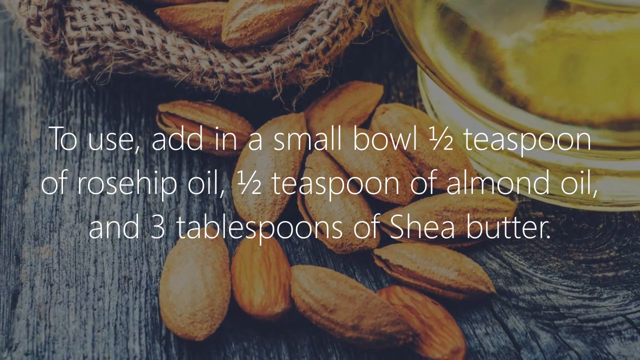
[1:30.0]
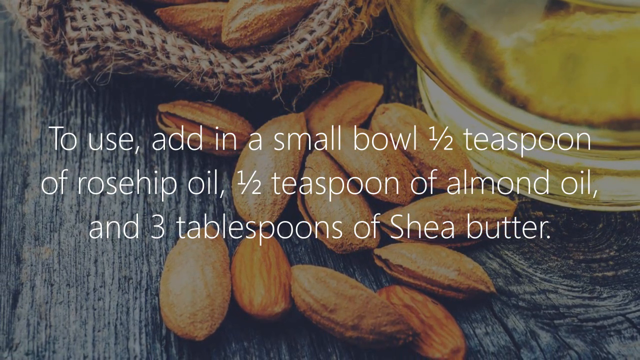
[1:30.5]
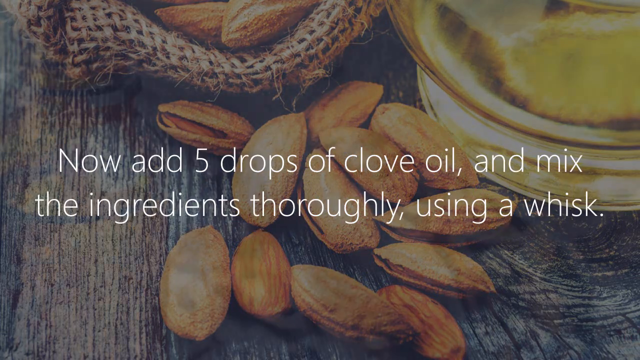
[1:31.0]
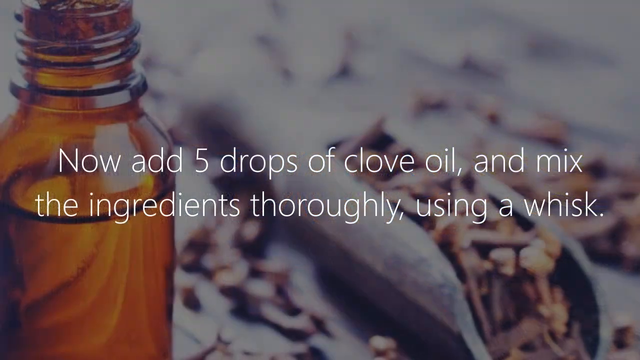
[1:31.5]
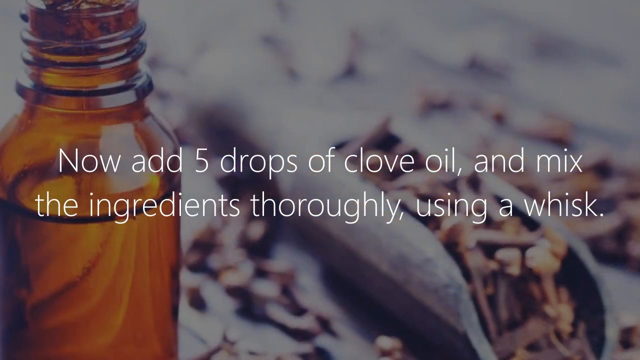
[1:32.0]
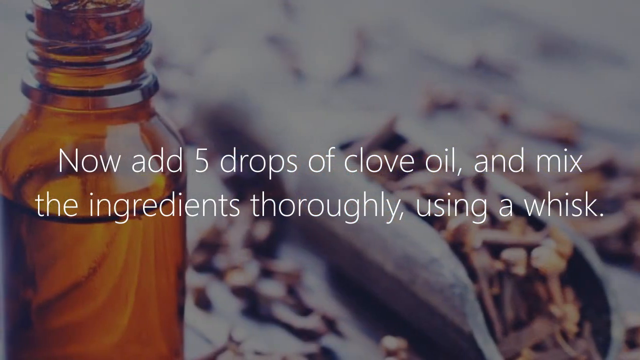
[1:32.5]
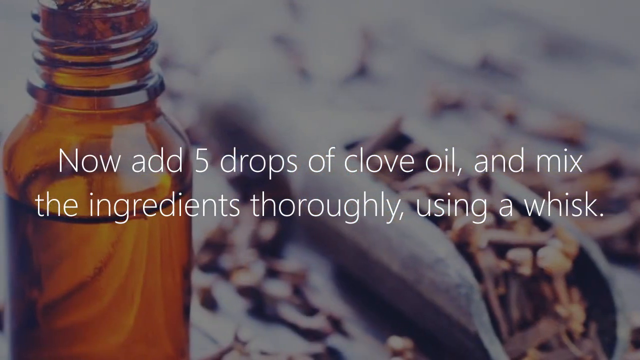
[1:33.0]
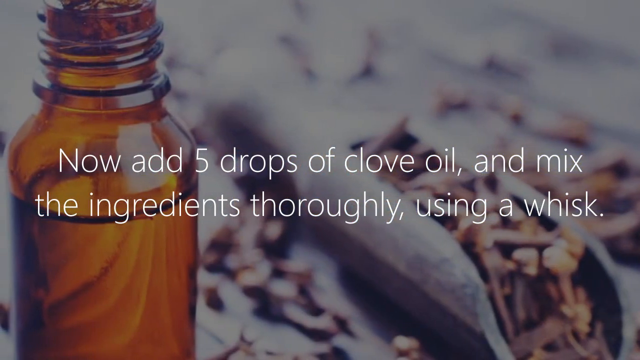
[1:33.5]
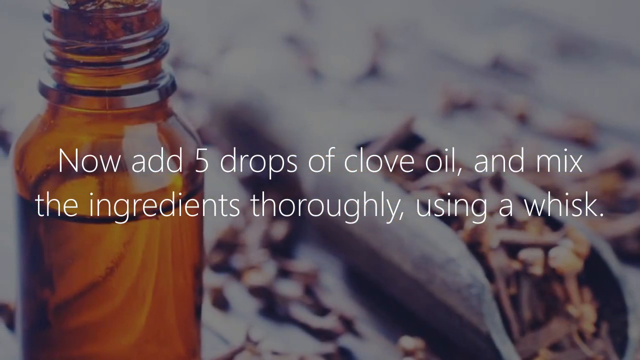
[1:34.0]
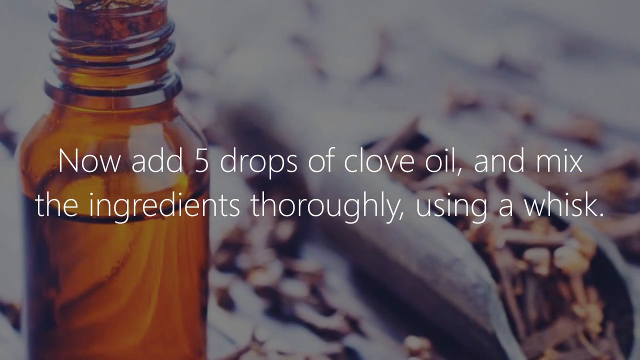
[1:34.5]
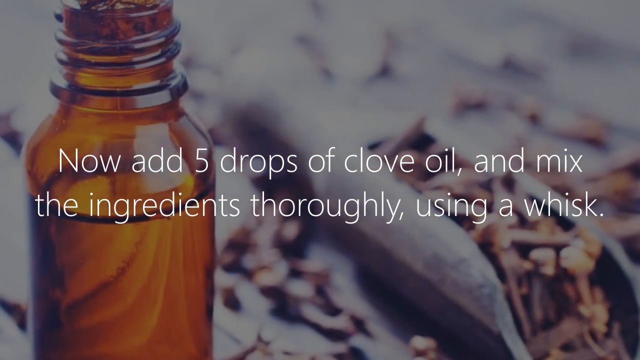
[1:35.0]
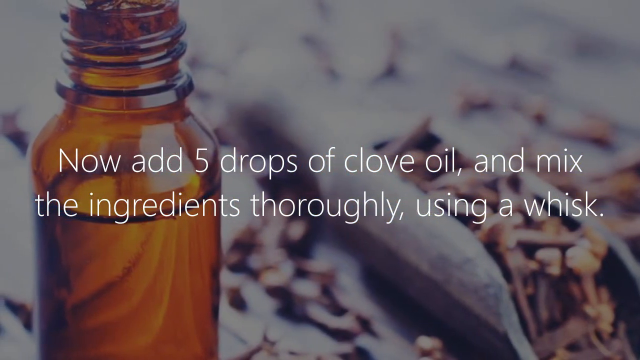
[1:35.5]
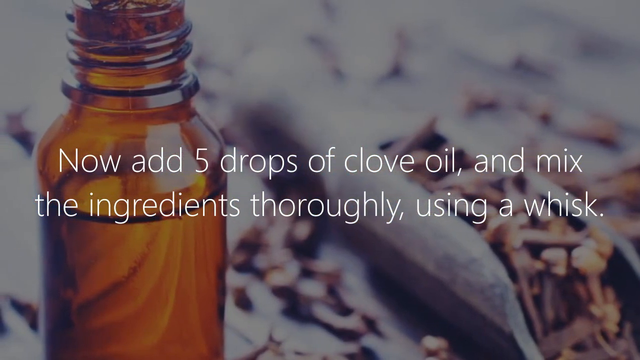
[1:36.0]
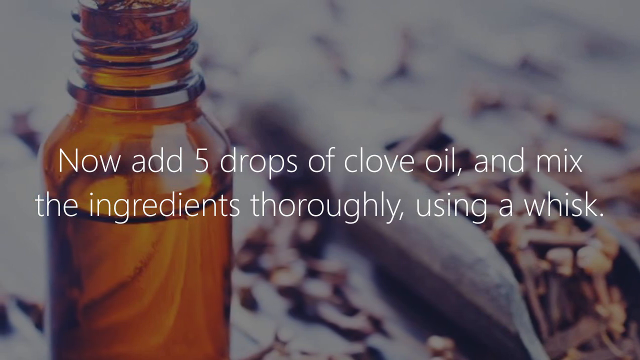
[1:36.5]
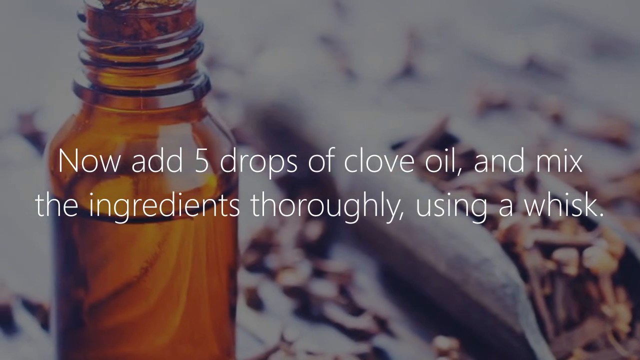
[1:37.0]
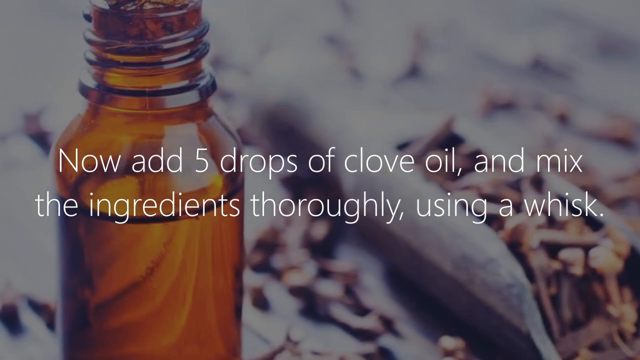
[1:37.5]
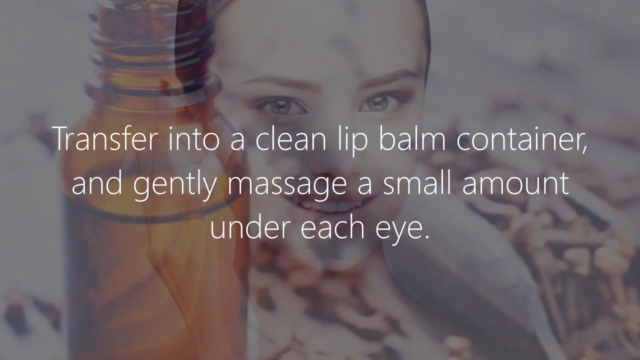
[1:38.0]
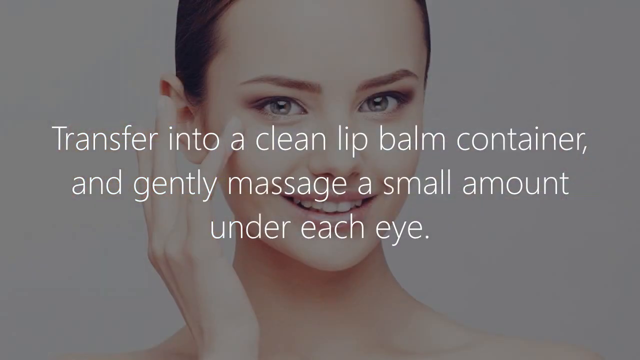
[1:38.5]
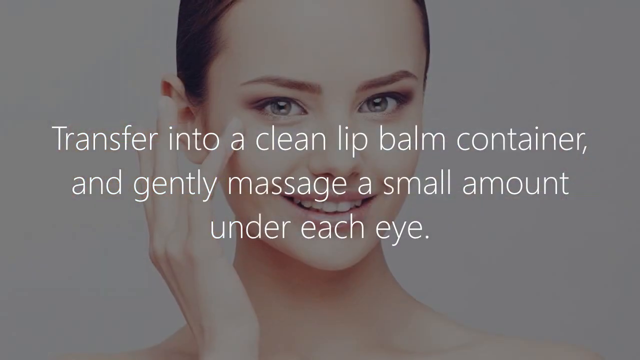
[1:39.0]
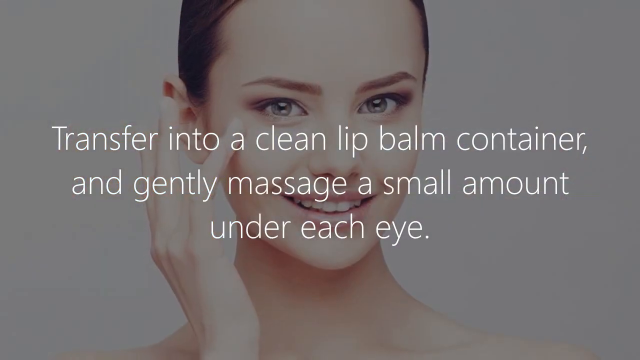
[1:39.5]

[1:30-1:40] The third benefit of rosehip oil for skin is presented: reducing dark circles, particularly under the eyes, because the oil contains vitamin K. The recipe begins with adding half a teaspoon of rosehip oil, half a teaspoon of almond oil and three tablespoons of shea butter to a small bowl.